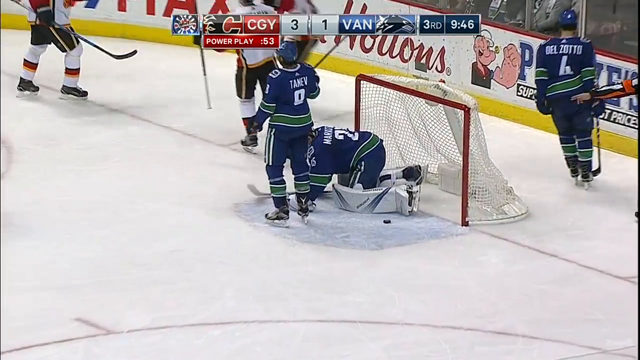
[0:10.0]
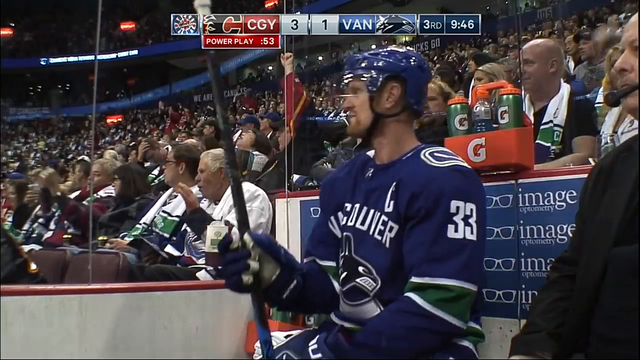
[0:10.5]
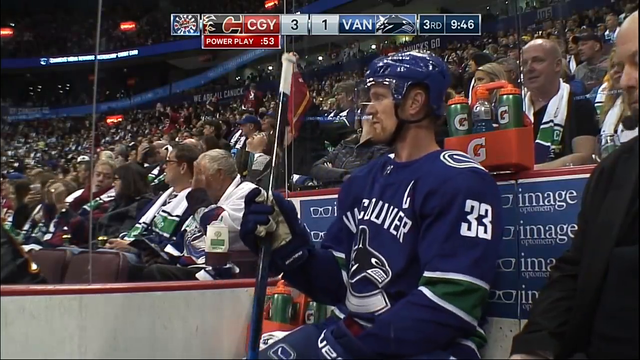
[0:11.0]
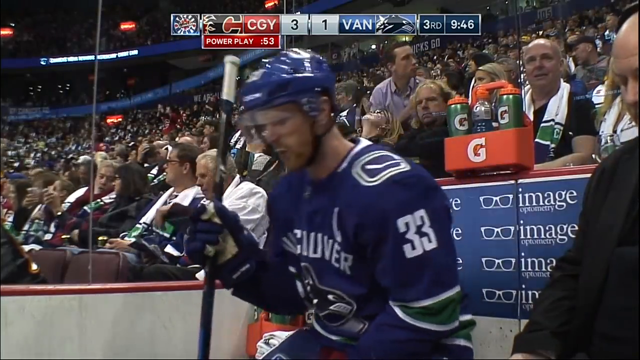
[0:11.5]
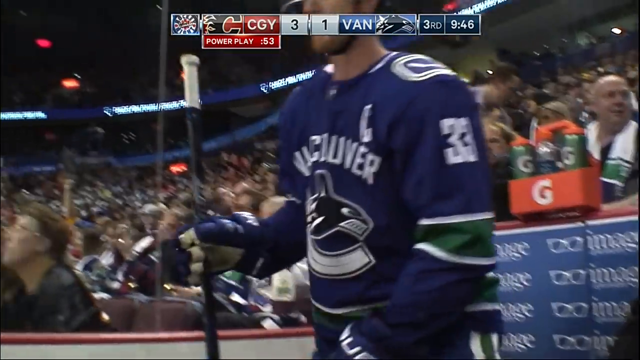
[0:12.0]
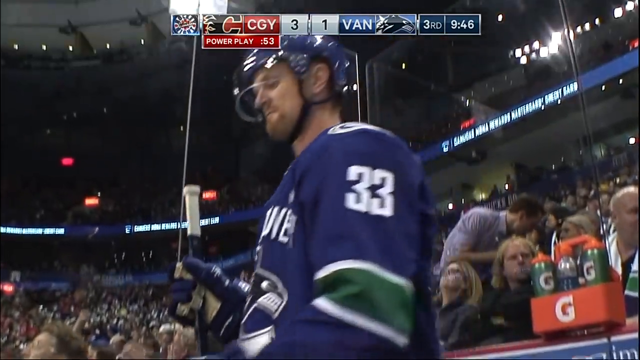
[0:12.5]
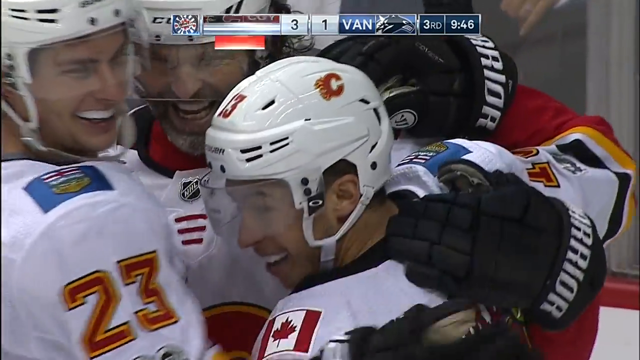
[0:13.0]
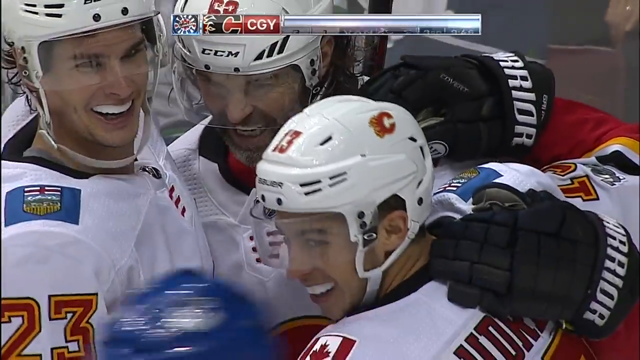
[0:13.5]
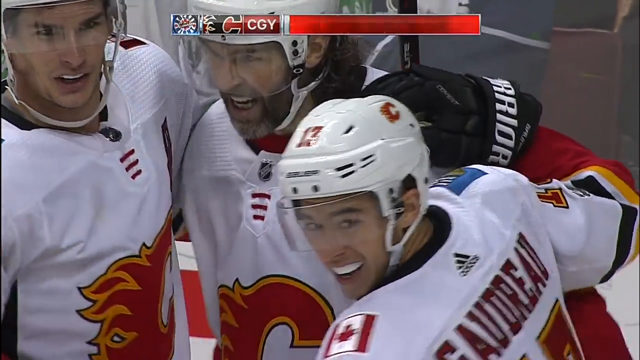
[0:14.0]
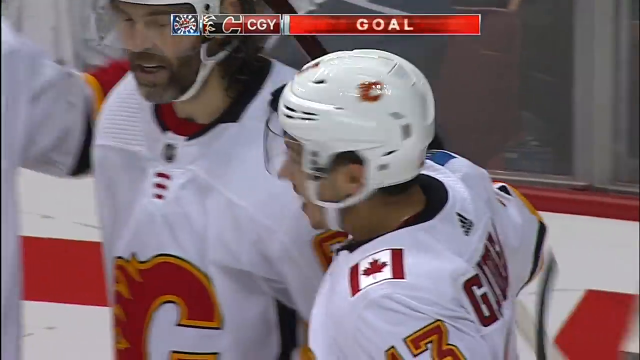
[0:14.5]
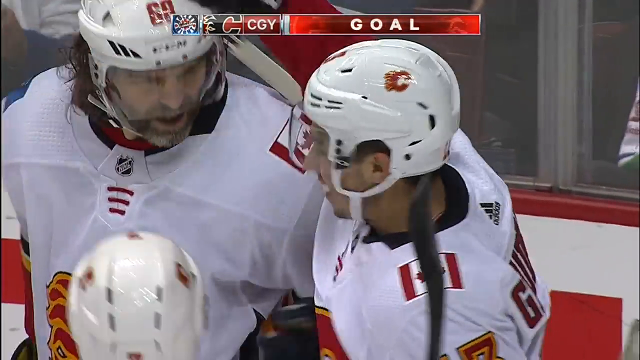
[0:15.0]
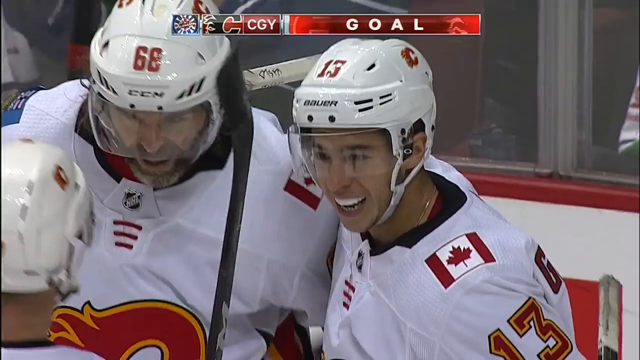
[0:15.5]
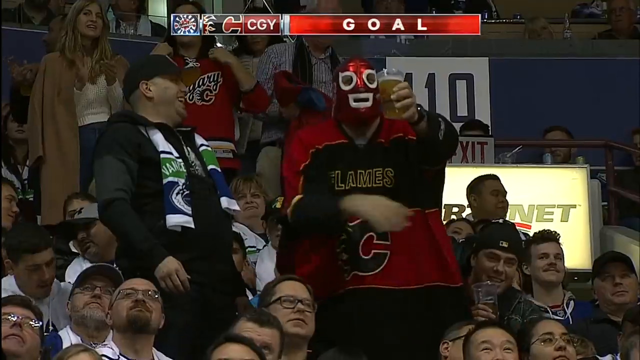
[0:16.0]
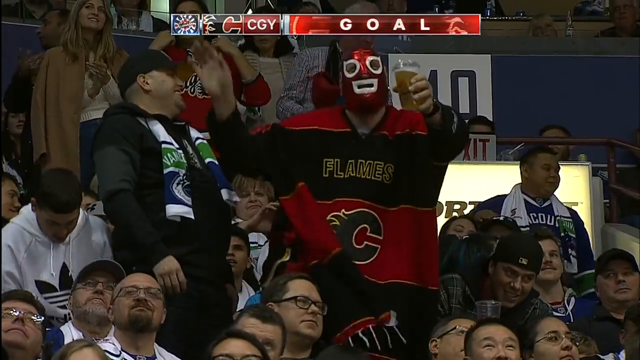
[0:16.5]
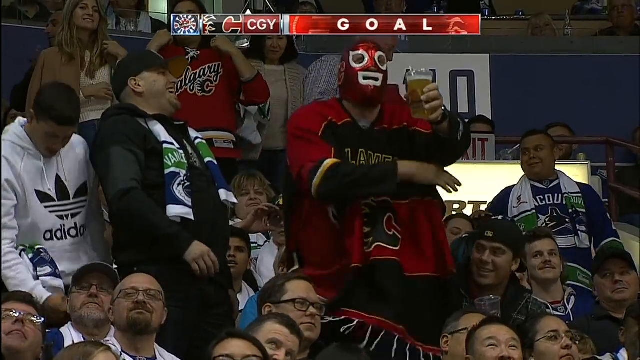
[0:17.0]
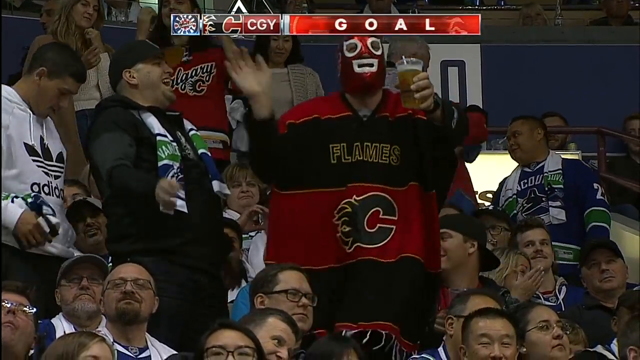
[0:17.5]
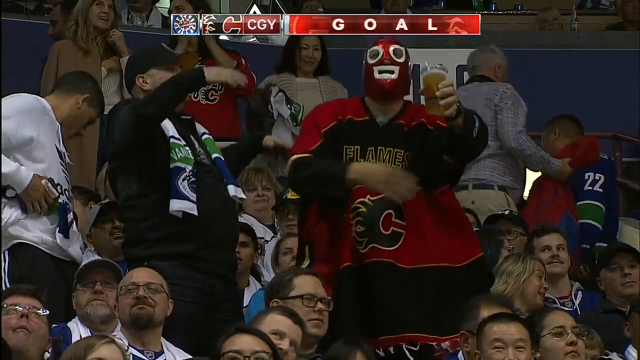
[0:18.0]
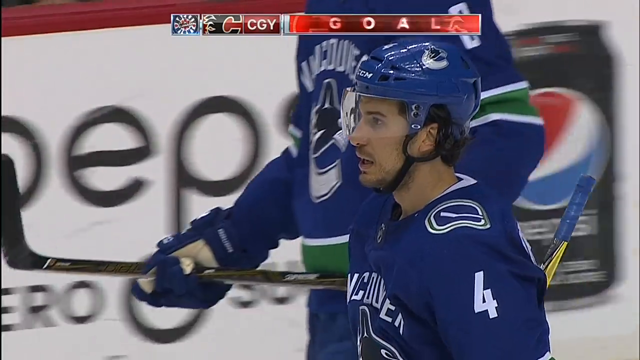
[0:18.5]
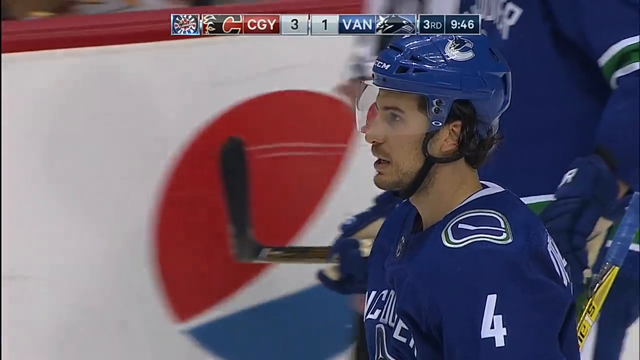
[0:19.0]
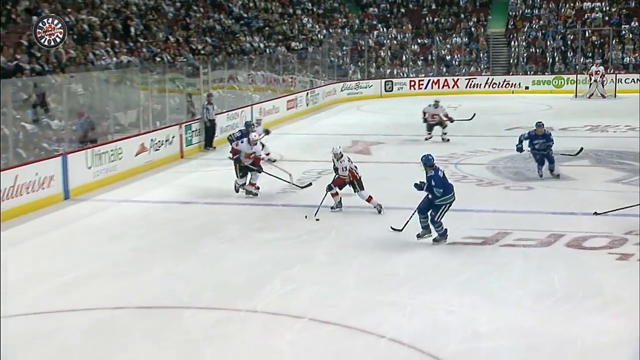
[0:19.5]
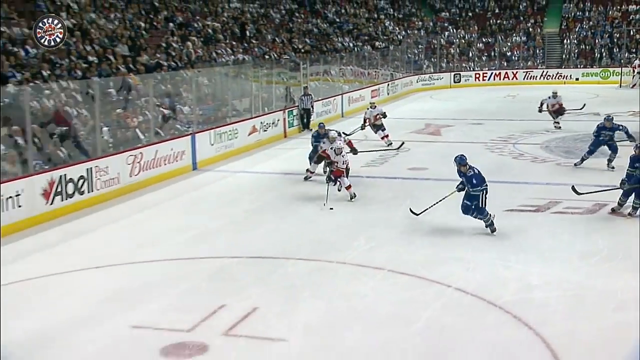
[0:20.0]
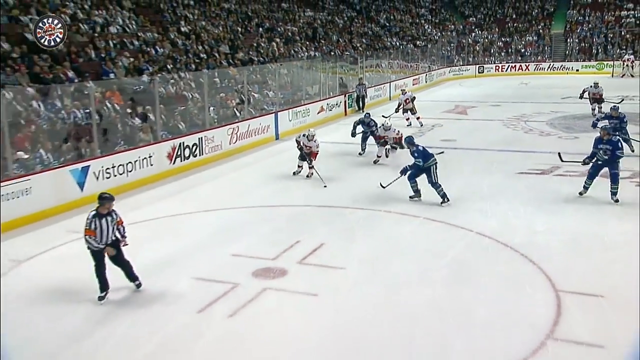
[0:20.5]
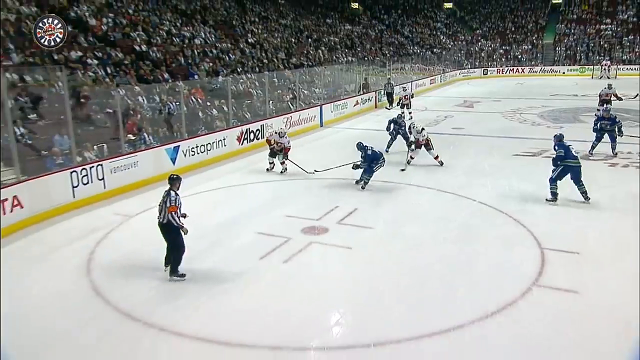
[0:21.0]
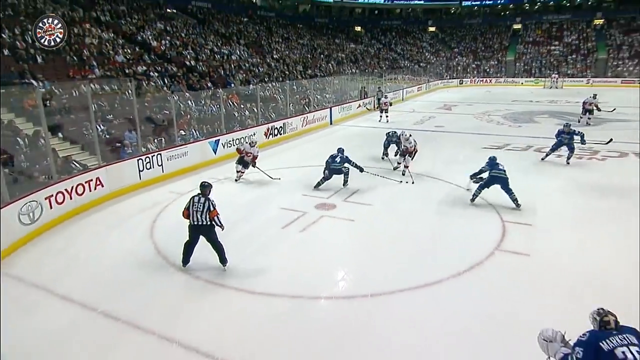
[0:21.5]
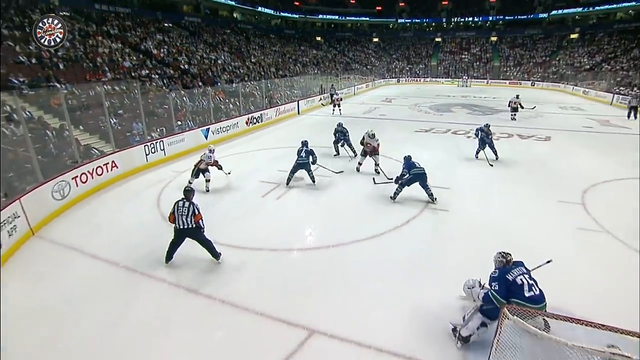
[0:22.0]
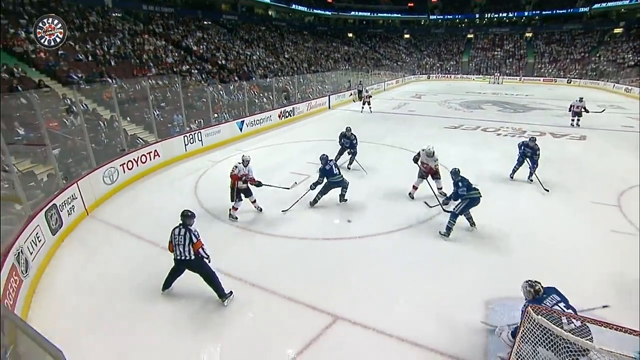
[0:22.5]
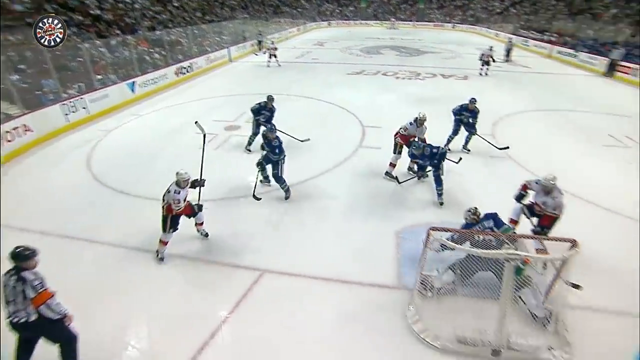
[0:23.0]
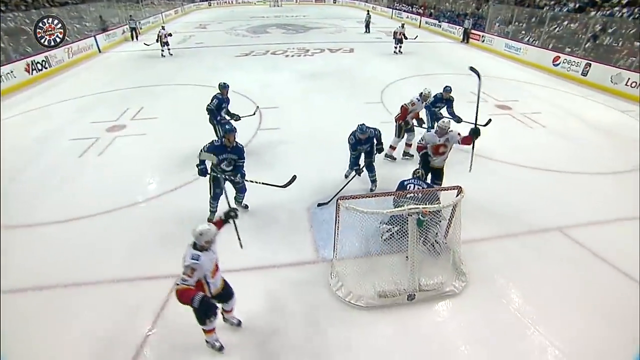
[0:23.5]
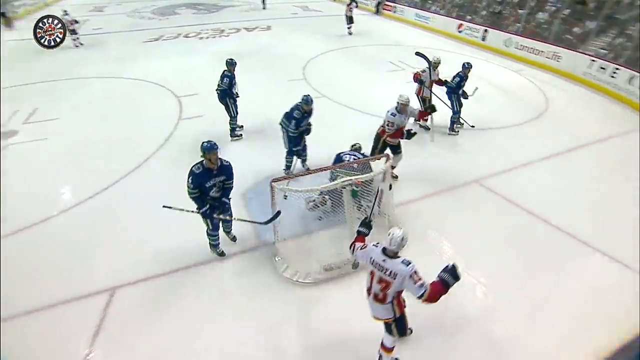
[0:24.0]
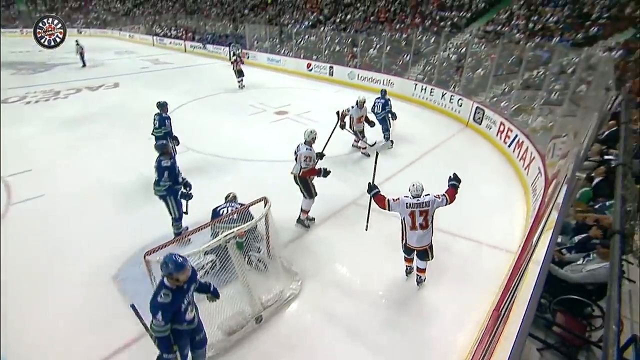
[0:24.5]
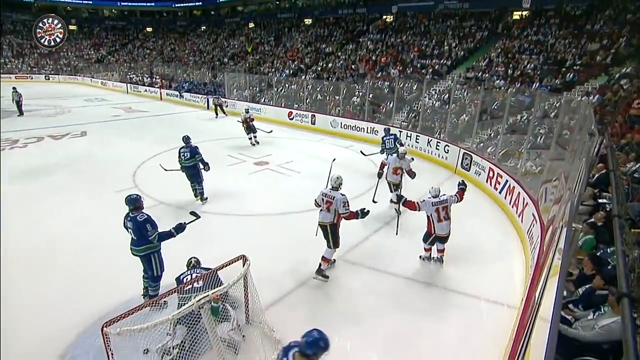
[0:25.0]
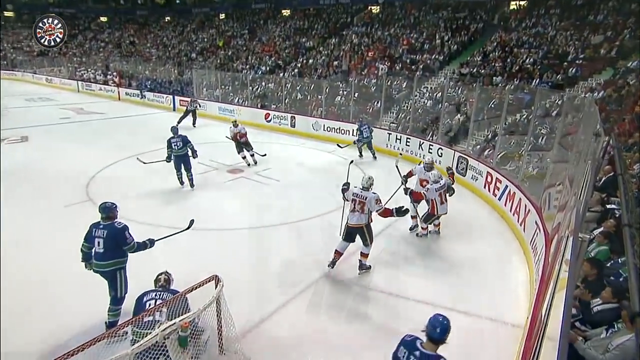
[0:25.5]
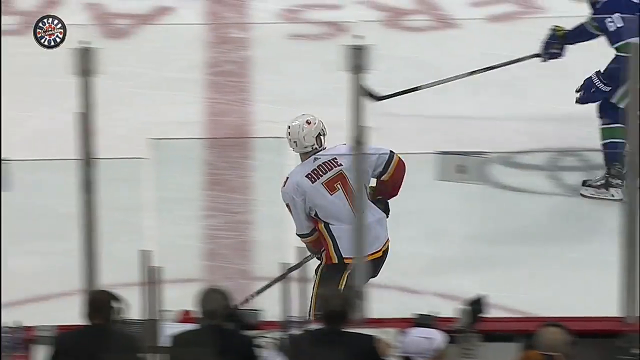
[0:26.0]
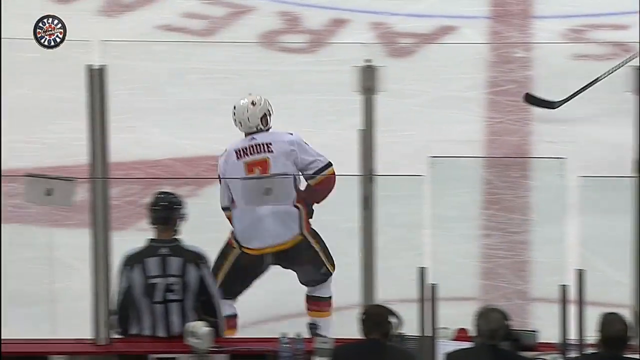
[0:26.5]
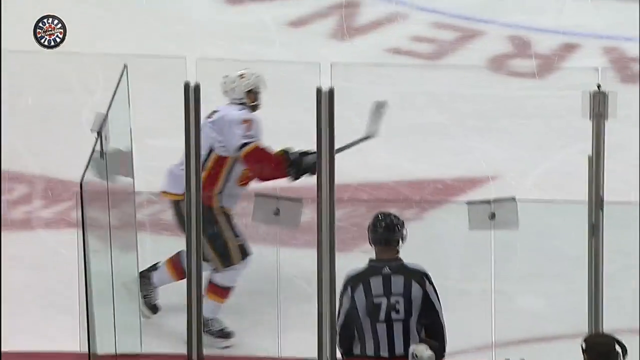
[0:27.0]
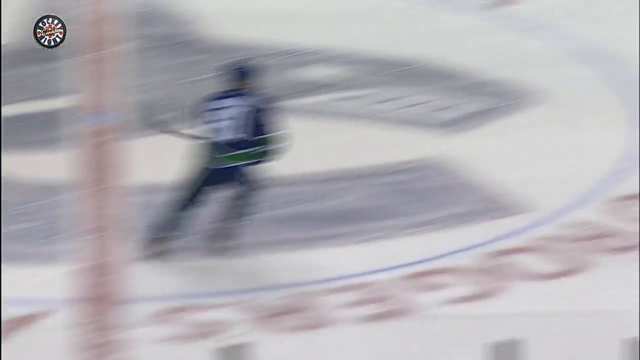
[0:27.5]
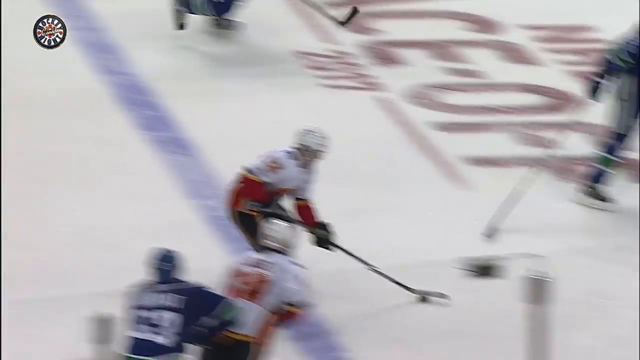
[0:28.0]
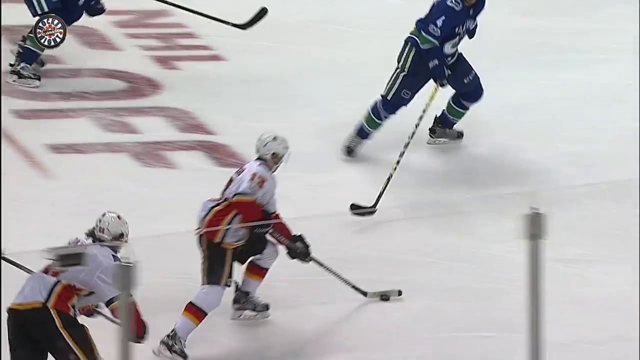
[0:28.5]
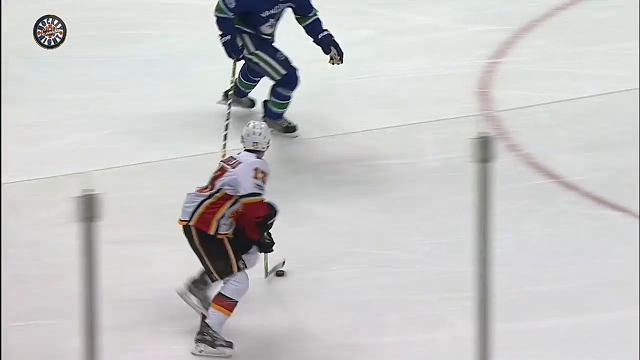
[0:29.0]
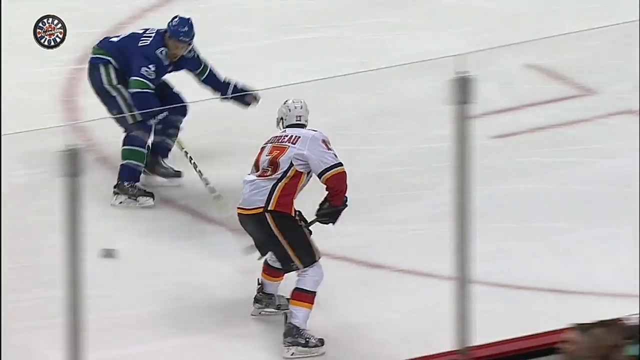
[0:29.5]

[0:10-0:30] A Vancouver player, number 33, is in the penalty box while the Calgary players in white celebrate scoring a goal. The scene changes to a replay of the goal shown multiple times: the team in white passes the puck three times and scores while Calgary is on a power play, and the goalie is on the ice. The video cuts to number 33 in blue in the penalty box, looking really upset. Highlights of the Calgary goal are shown over and over, and few faces are visible. The video cuts to the Vancouver player again, then to a shot showing that number 23 scored the goal, and to number 13 in white, Johnny Goudreau, who assisted on the play, smiling and happy.